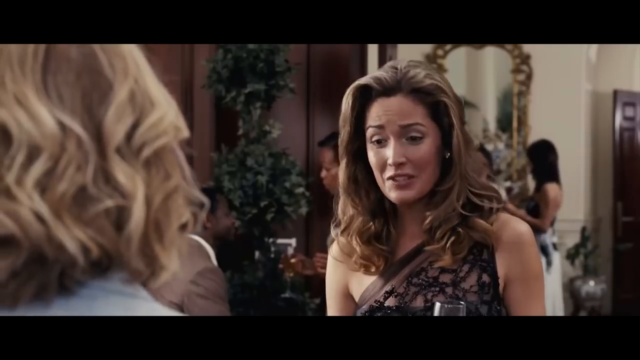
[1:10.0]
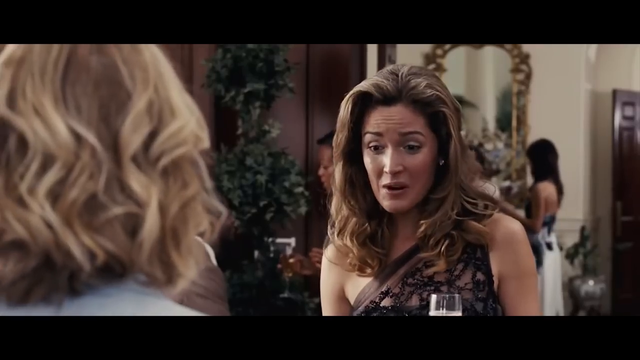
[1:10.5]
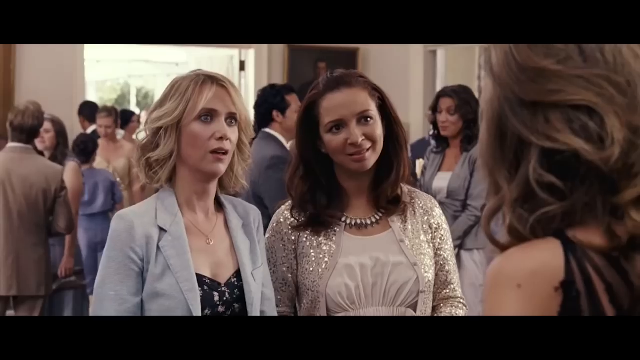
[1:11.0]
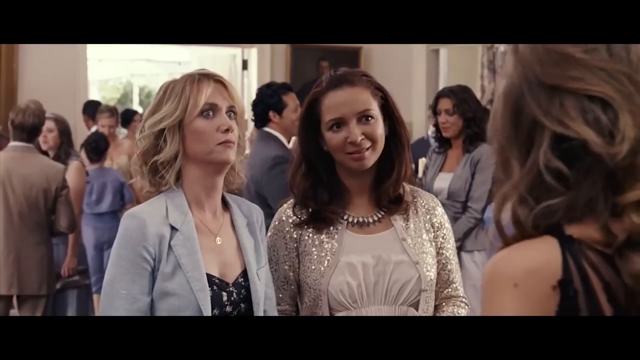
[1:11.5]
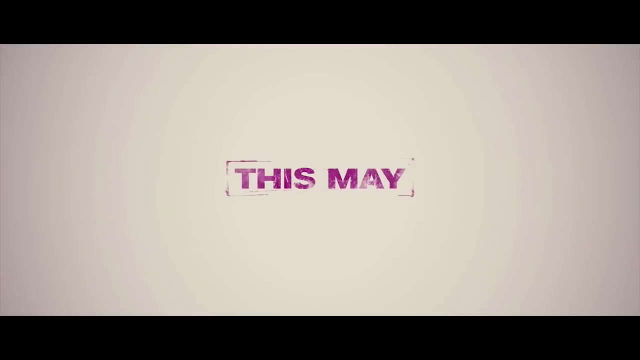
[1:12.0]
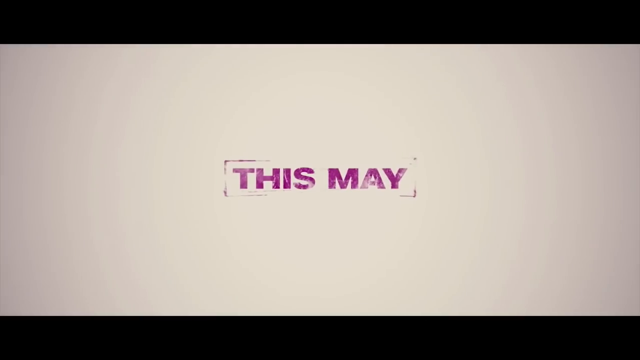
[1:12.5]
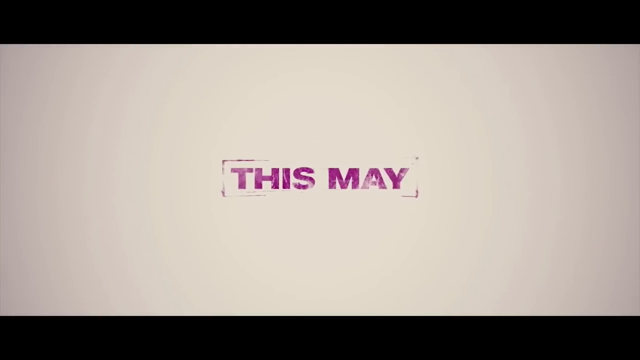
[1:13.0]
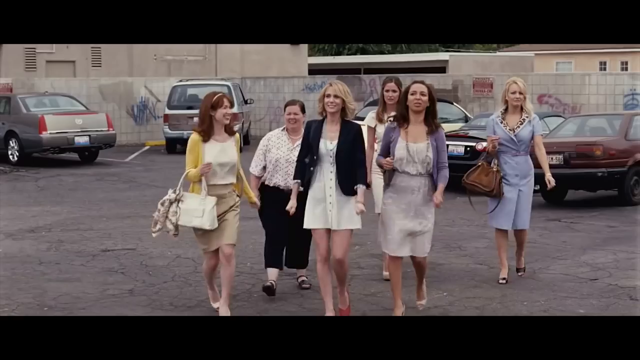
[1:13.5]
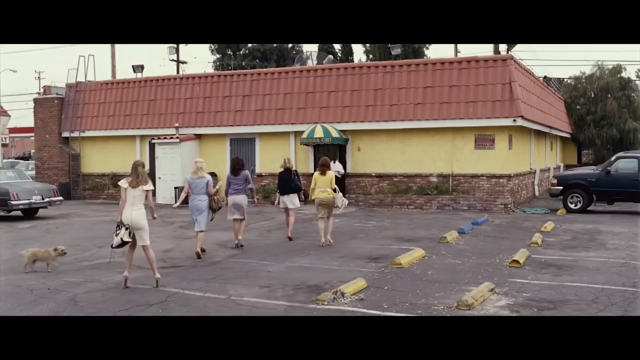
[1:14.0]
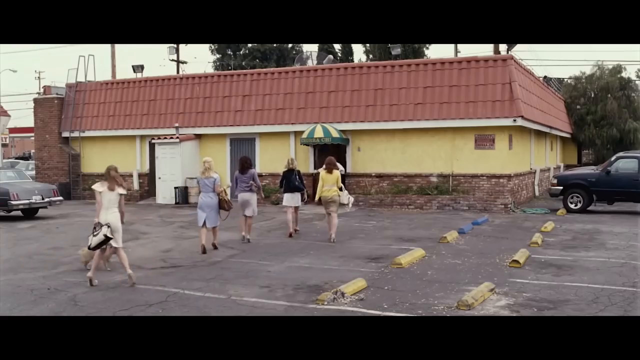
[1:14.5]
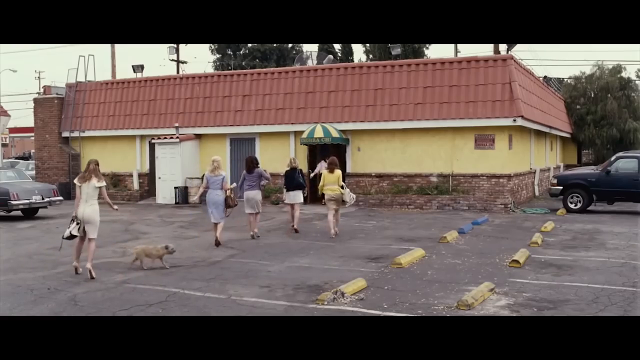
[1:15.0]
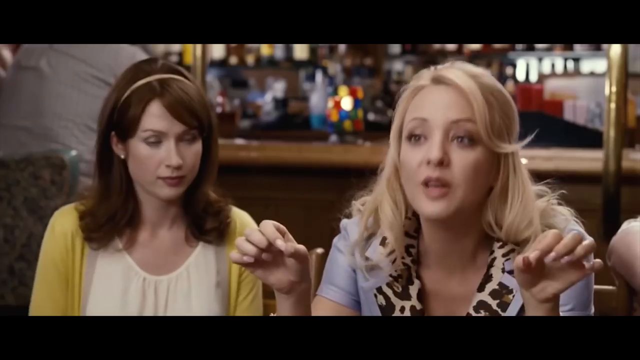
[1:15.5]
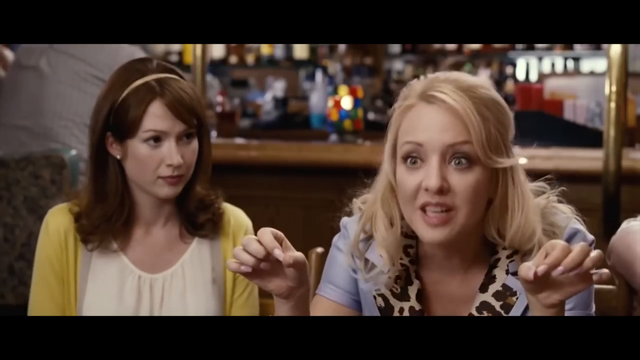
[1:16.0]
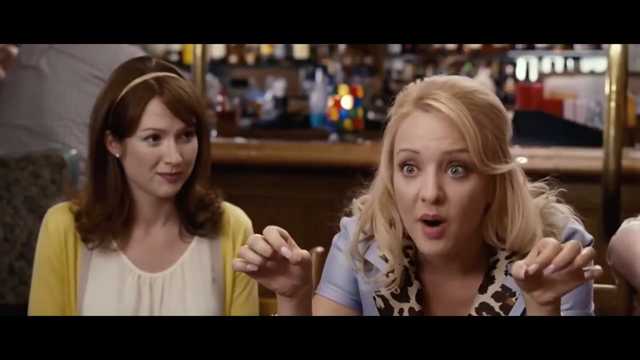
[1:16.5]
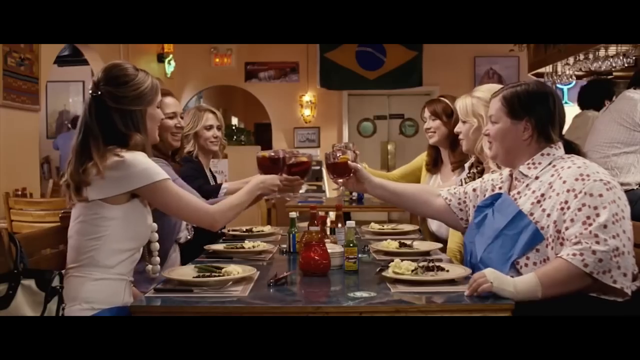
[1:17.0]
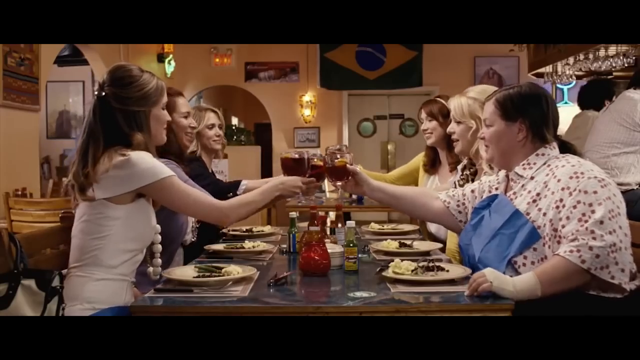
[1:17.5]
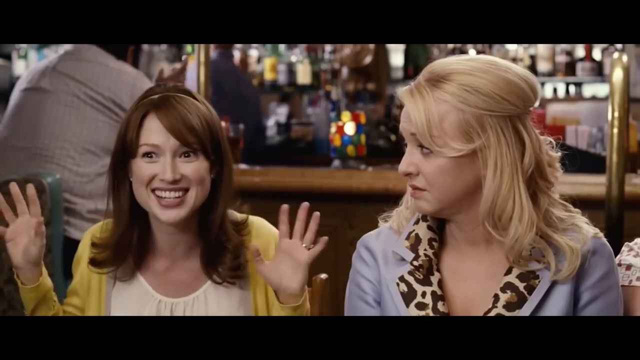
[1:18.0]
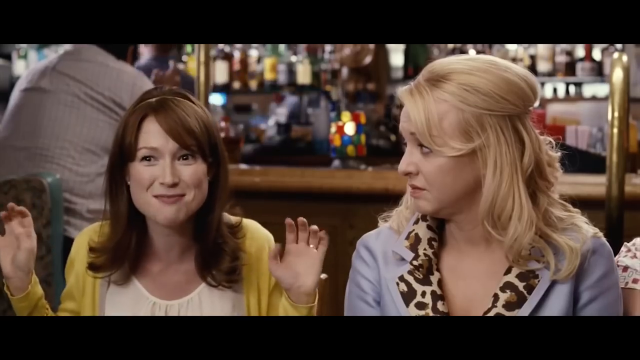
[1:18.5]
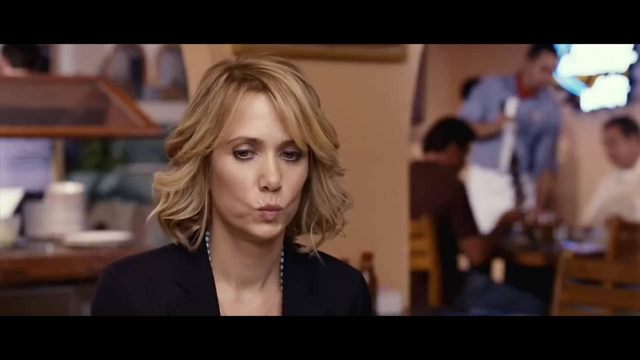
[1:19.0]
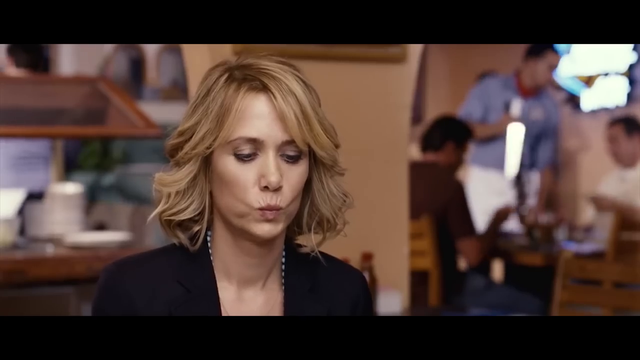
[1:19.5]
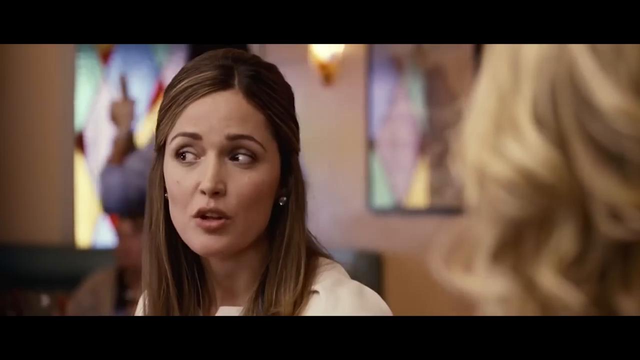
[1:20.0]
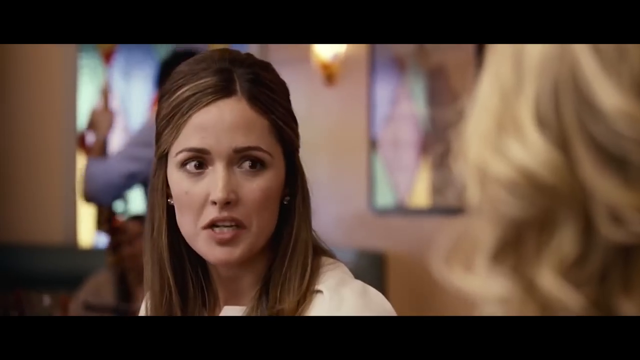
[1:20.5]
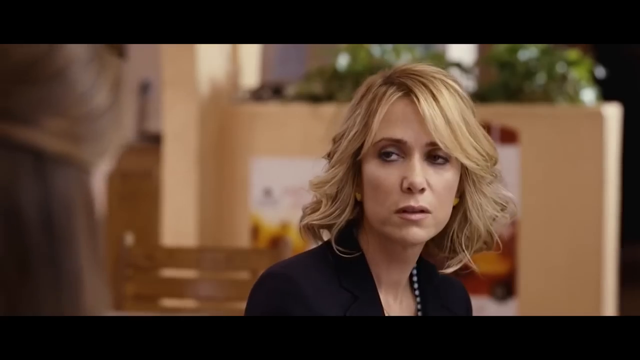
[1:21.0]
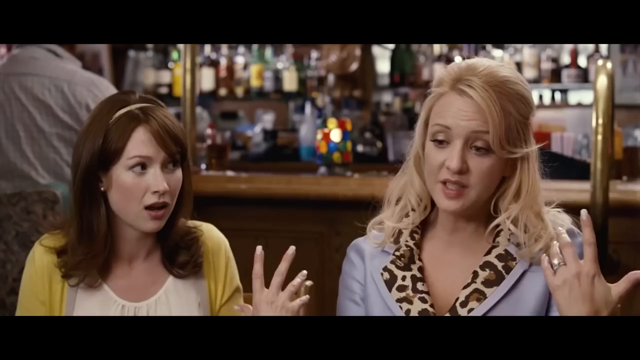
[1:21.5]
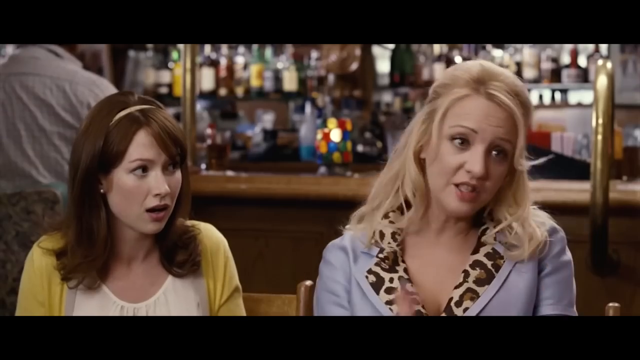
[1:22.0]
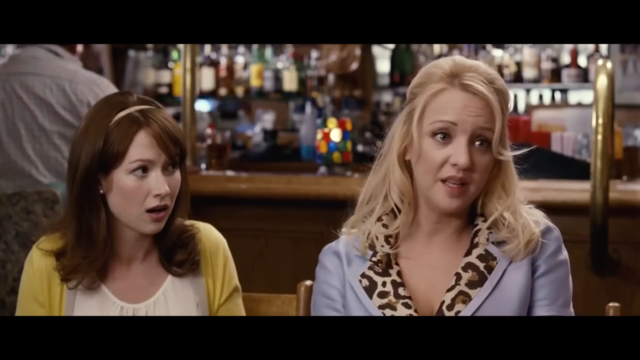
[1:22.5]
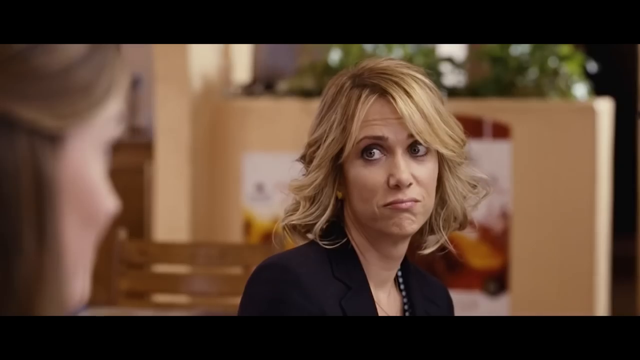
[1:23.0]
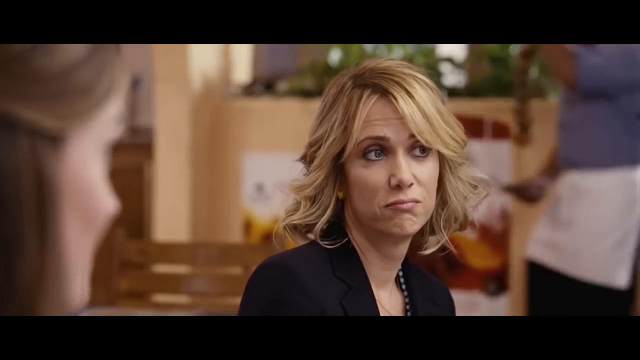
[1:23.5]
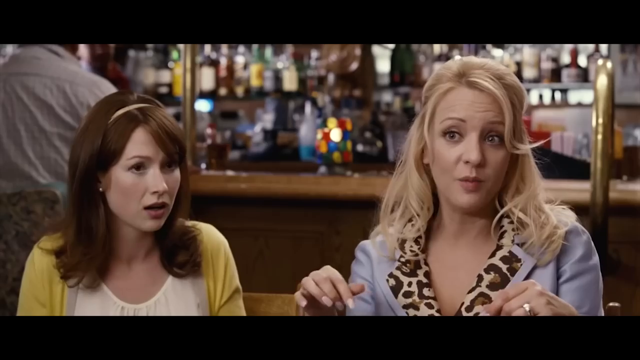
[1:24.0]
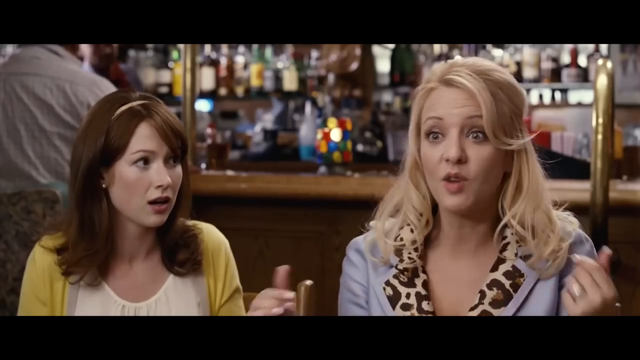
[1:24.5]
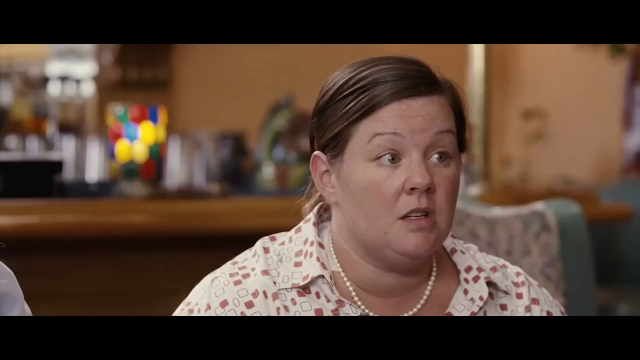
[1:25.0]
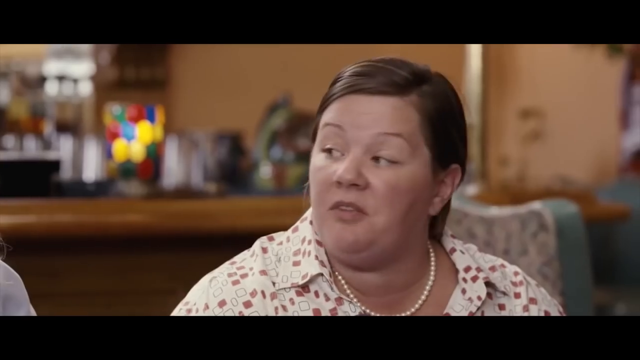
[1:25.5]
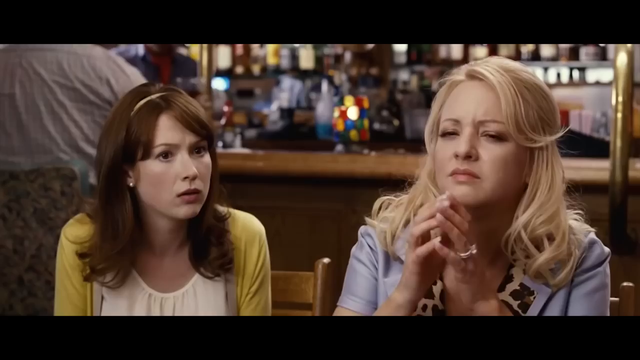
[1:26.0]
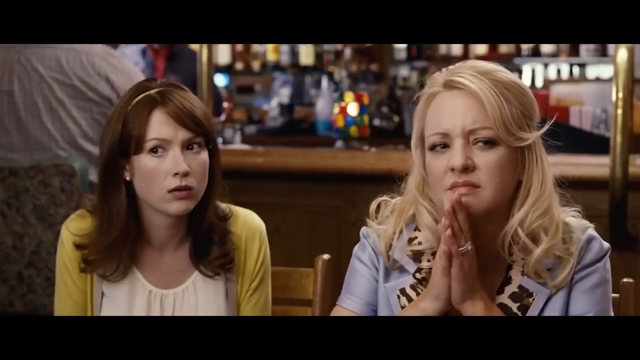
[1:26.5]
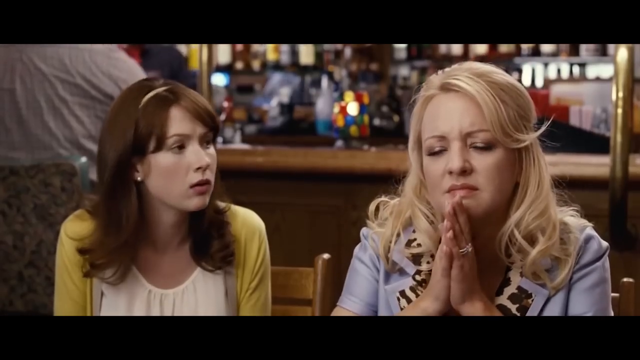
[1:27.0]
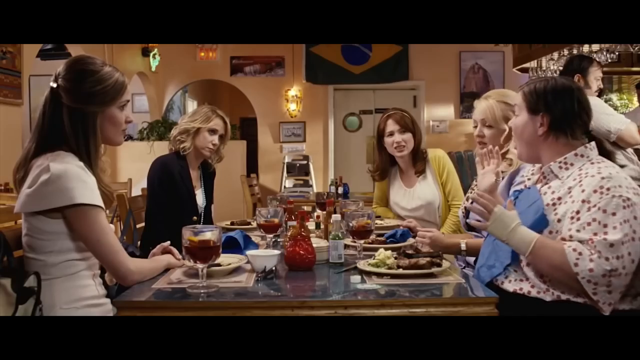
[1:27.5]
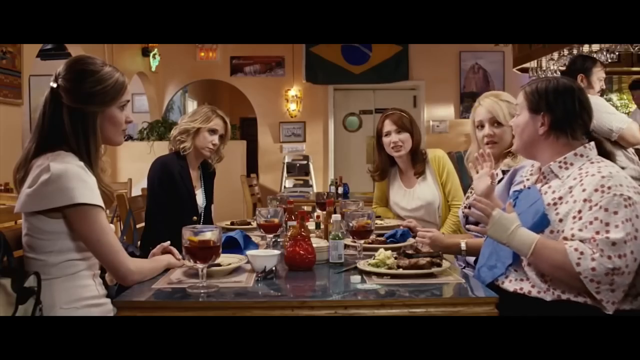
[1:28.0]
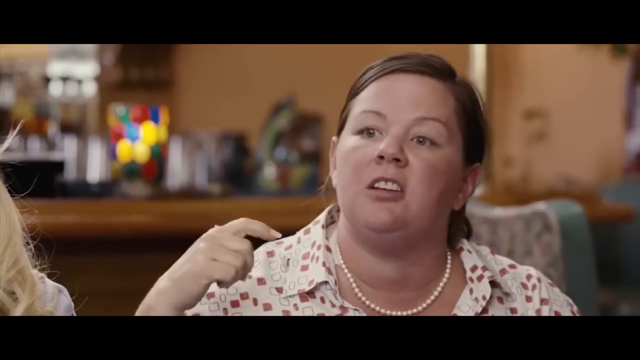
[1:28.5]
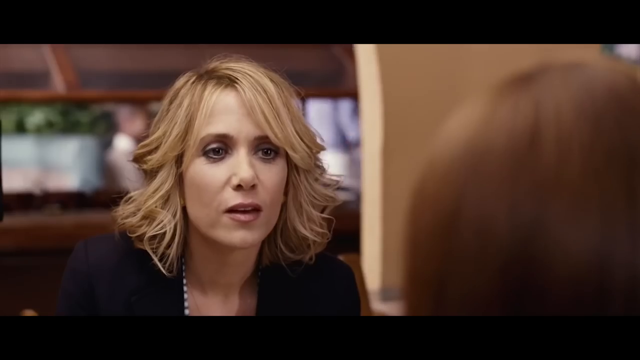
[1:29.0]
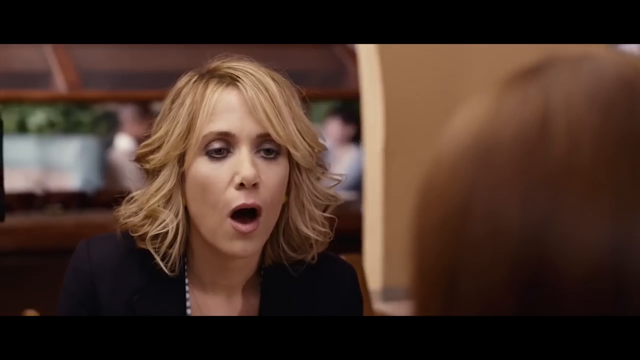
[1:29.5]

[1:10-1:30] The women walk into a restaurant; the restaurant is yellow, and a dog runs through the parking lot. The women sit around a table in the restaurant with plates of food in front of them, and at one point, sitting across from each other, they all raise their glasses in a toast. The women then have a conversation that appears very uncomfortable for some of them, while others look very confused, and at times some look perplexed or even offended. Behind some of the women there is a bar, where one person appears to be sitting. Throughout the conversation mainly a few people talk while the others look confused, upset or even perplexed.